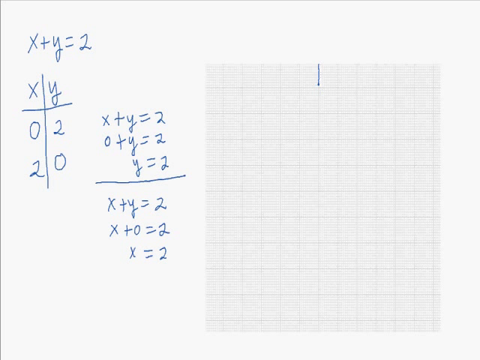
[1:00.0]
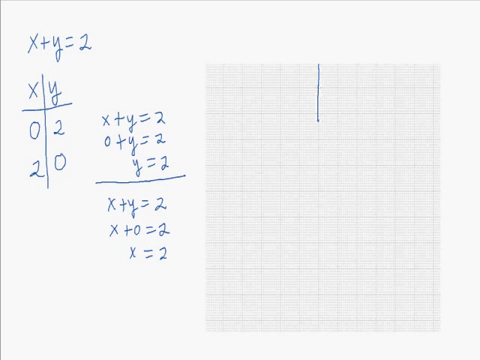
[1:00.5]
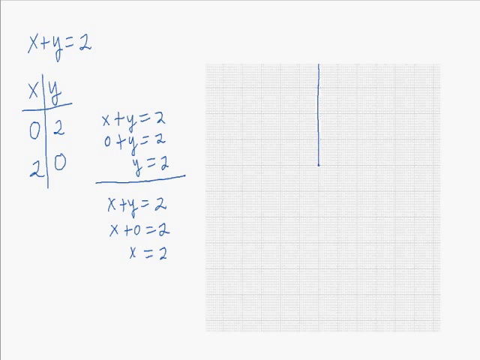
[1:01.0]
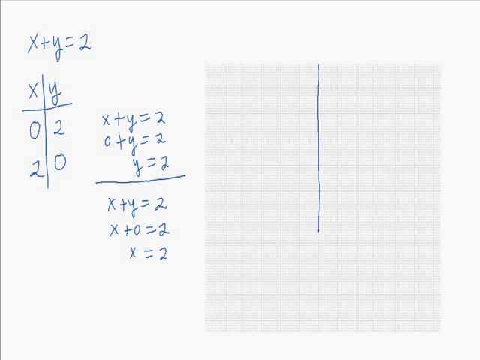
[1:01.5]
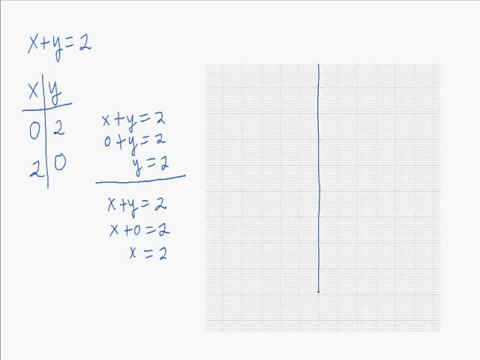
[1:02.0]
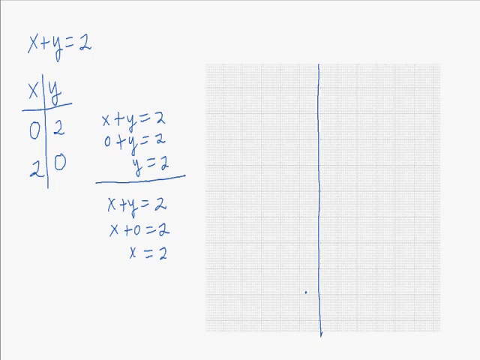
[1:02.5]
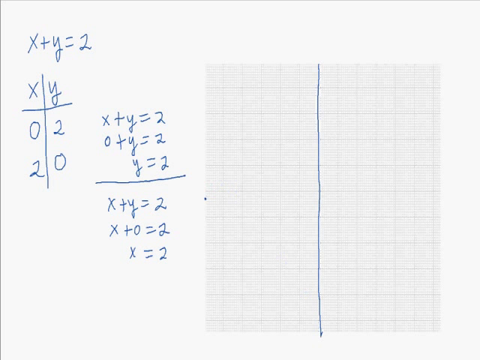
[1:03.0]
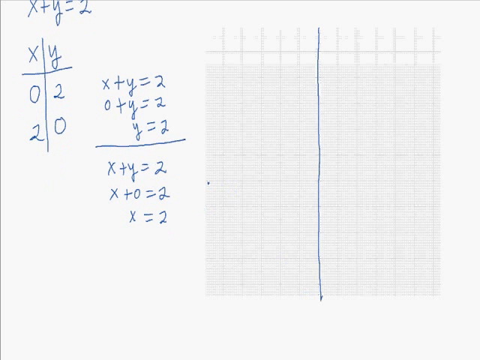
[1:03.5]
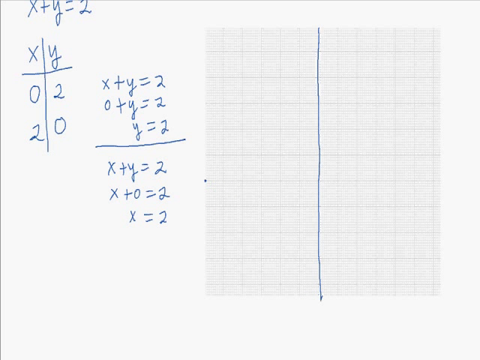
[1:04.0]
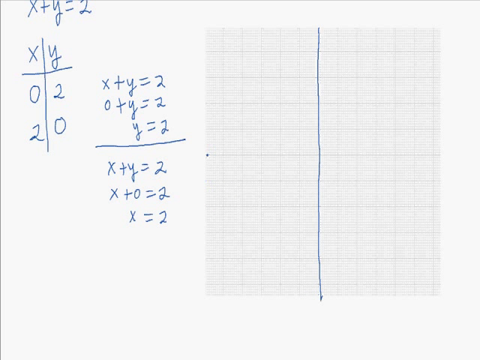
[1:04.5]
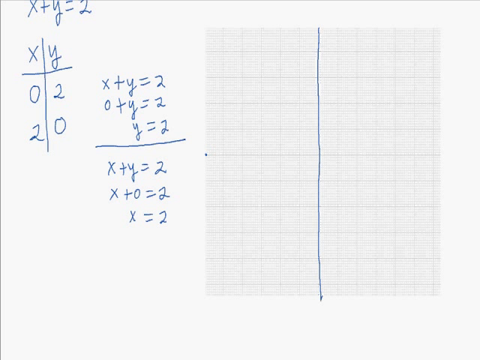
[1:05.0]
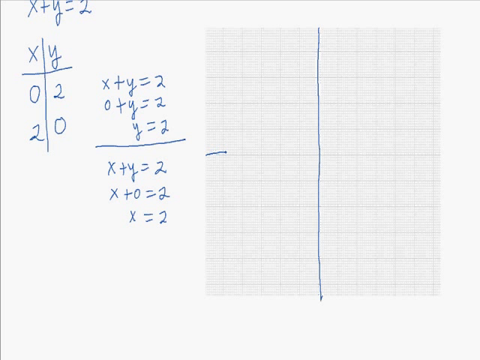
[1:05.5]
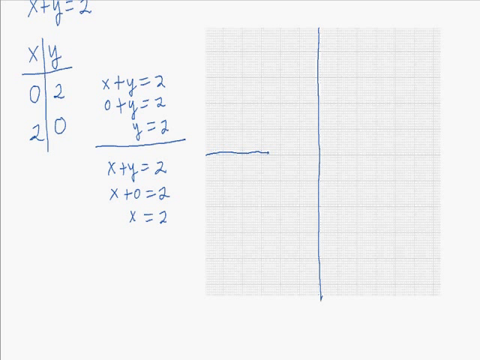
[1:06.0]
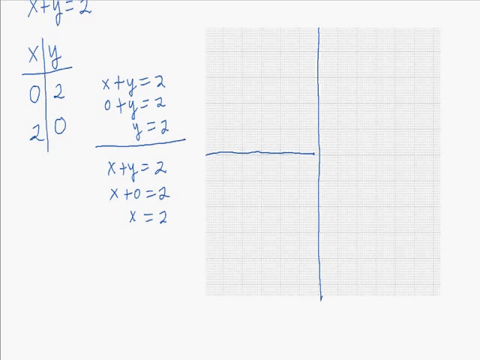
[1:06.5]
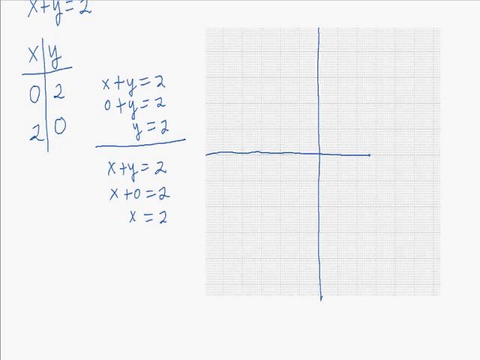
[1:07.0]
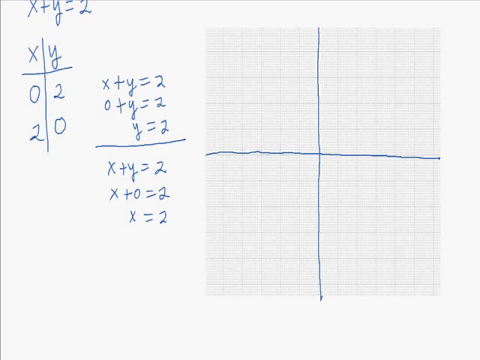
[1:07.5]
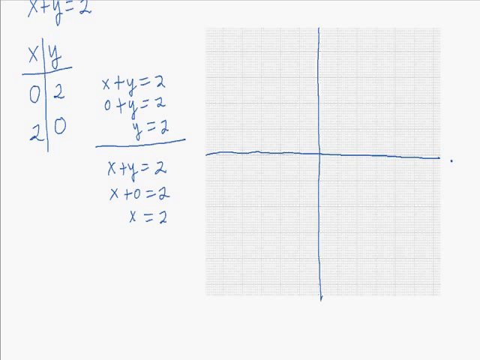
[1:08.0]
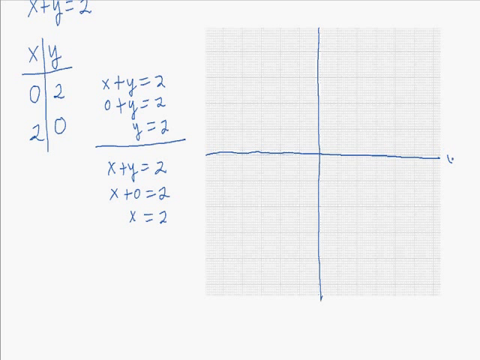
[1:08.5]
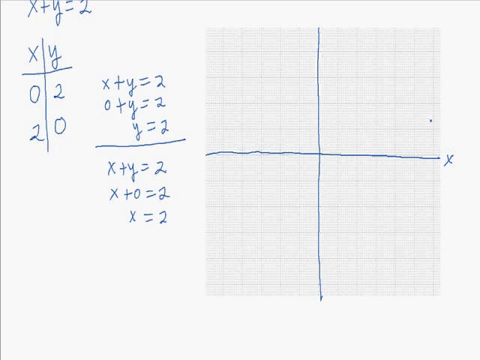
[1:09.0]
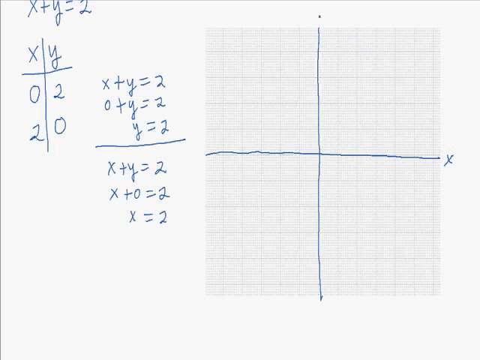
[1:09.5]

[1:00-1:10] The dot comes down the left side of the grid to the middle and draws a horizontal line over to the other side, creating a large cross in the middle of the grid space. The axes then appear to be labeled: a small X is drawn just outside the grid, to the right of the line that ends on the right, and a Y is drawn at the top of the top center line.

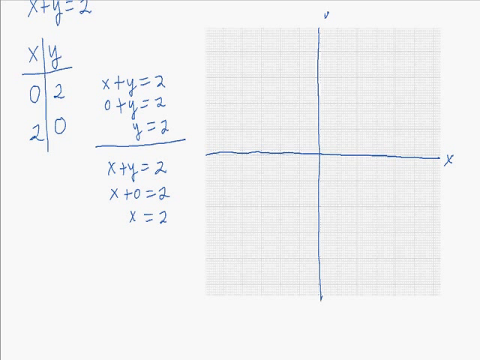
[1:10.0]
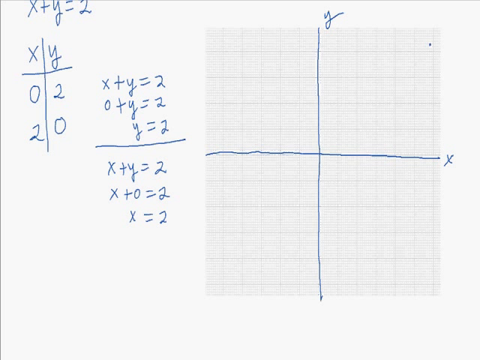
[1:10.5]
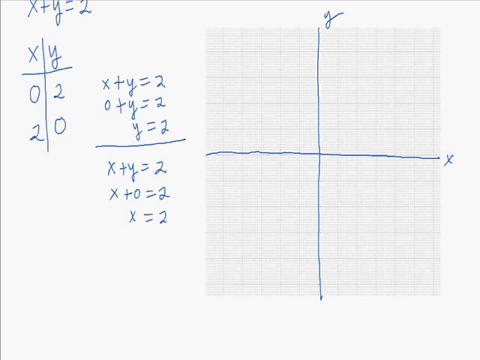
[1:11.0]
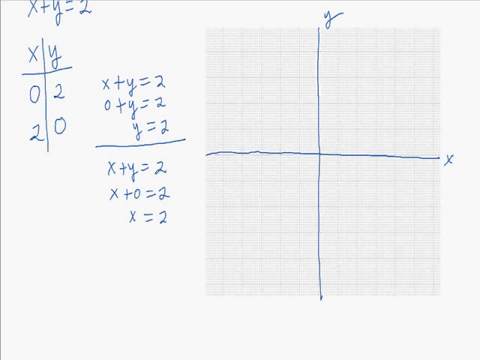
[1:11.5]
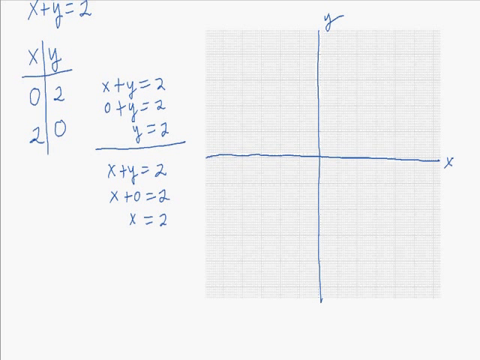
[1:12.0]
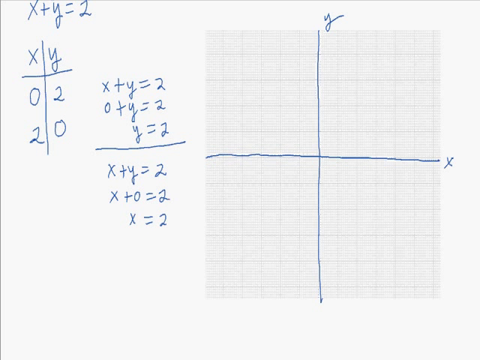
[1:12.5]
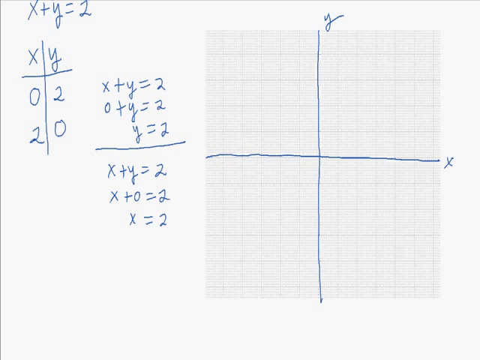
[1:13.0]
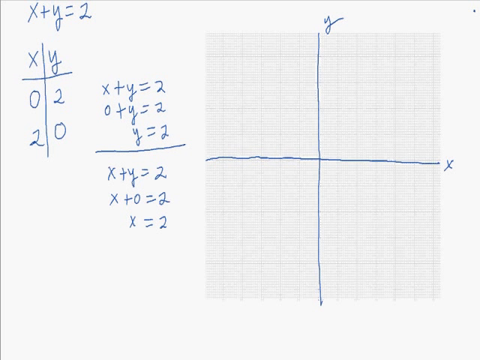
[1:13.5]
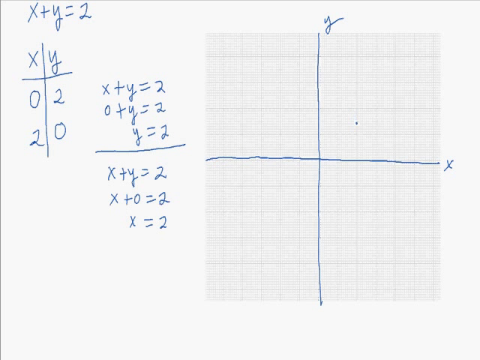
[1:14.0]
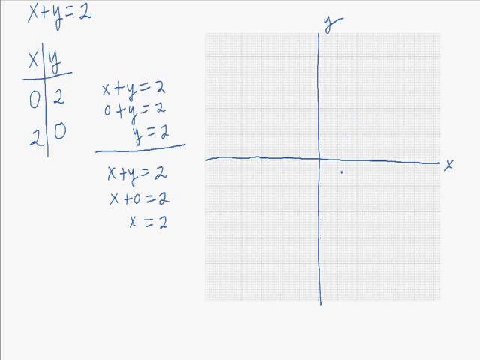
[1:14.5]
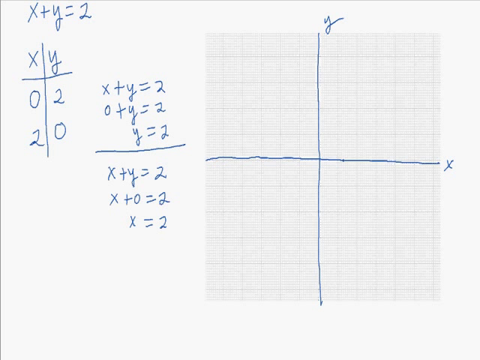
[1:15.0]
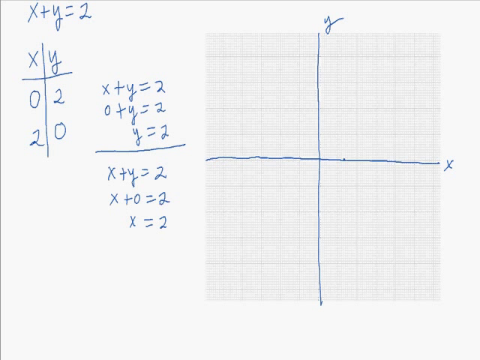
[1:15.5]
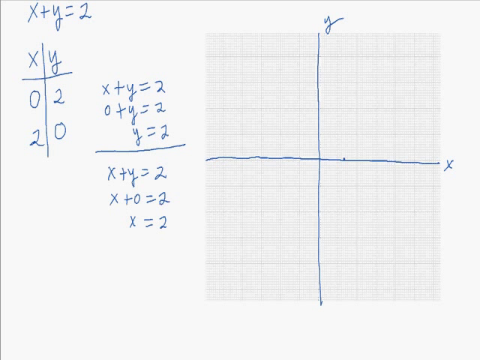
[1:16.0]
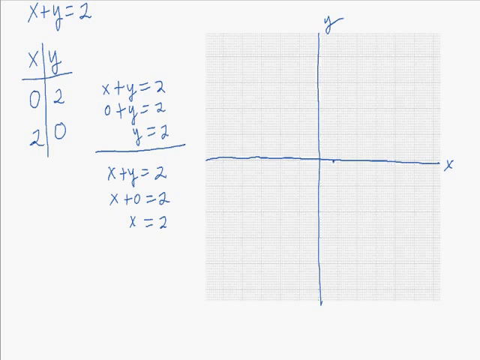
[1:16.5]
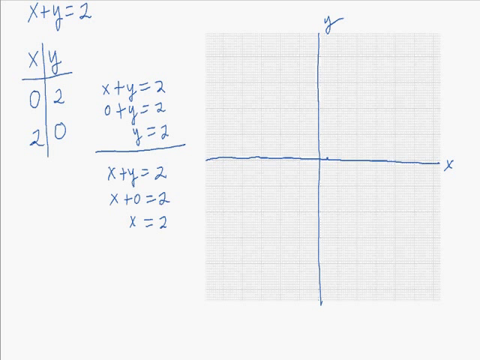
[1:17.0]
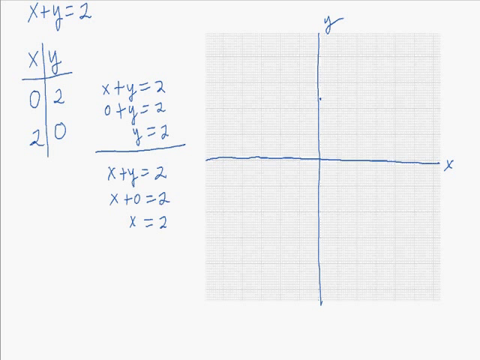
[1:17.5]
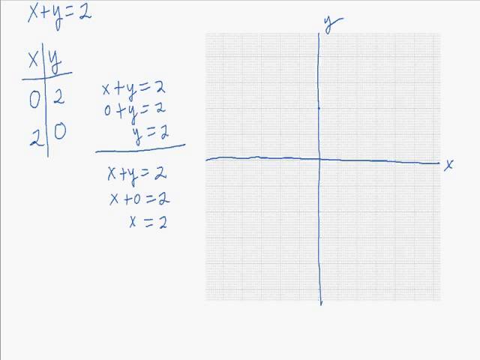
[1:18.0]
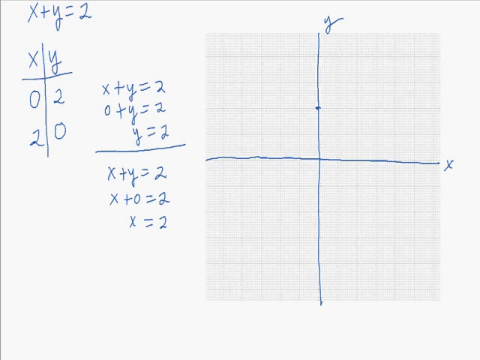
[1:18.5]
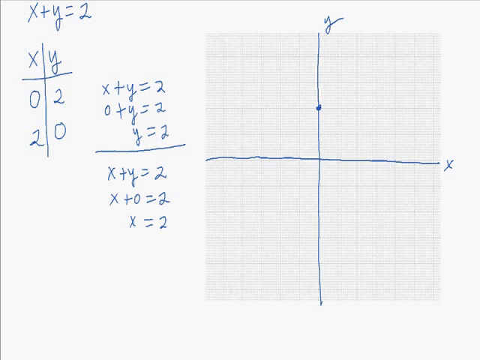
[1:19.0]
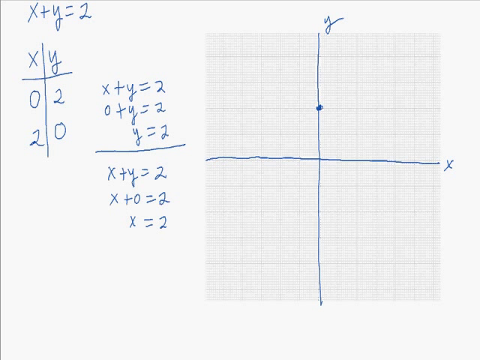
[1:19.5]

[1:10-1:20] The little dot floats around to a couple of different places, moving to the x-axis and the y-axis, and then lands on the upper section of the y-axis. Counting up two lines from the center where the lines intersect, a little dot is placed there. Everything is hand drawn, so the lines are not perfectly straight and the handwriting is not perfectly neat; it looks almost like someone doing their homework.